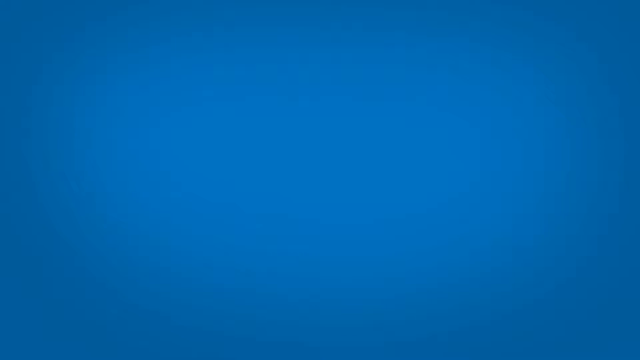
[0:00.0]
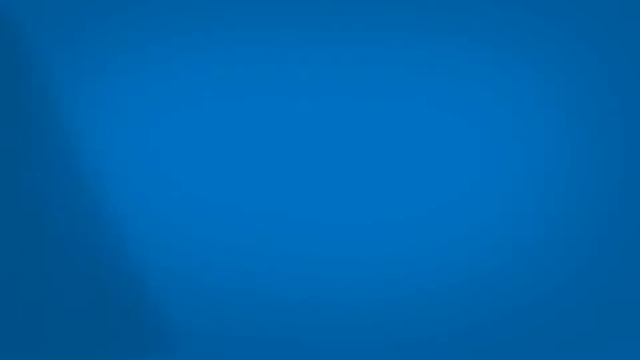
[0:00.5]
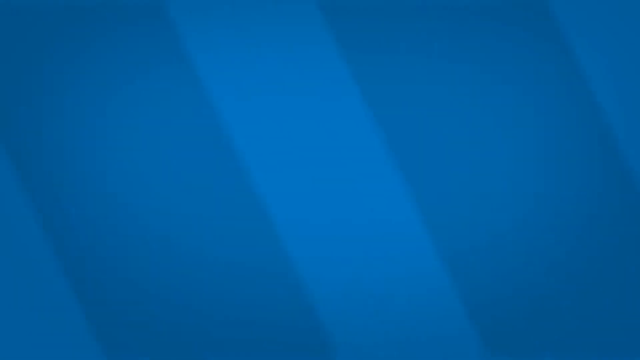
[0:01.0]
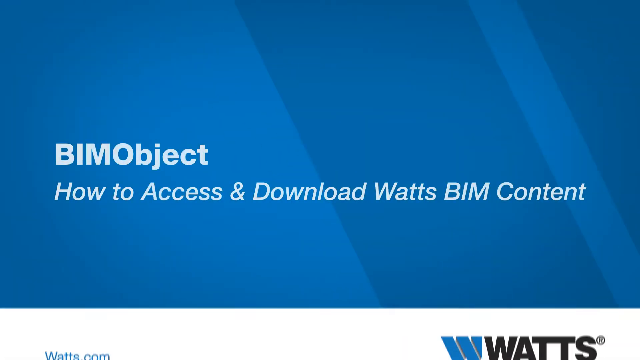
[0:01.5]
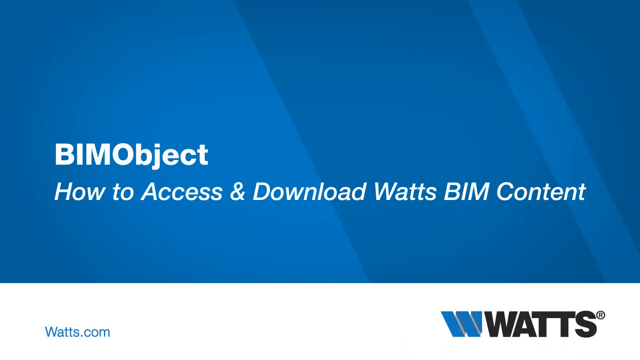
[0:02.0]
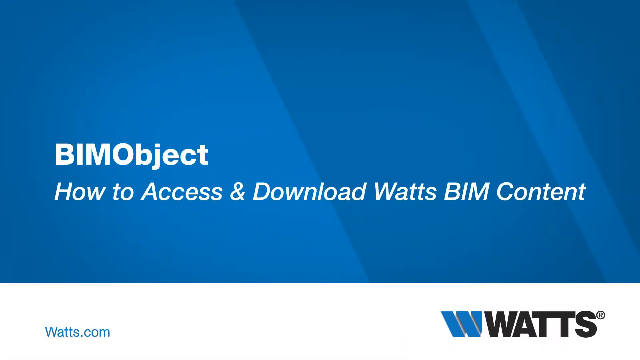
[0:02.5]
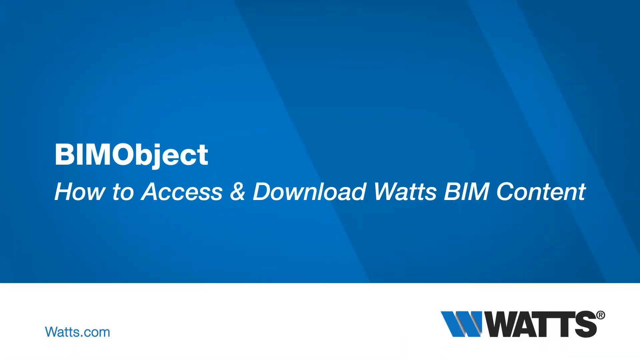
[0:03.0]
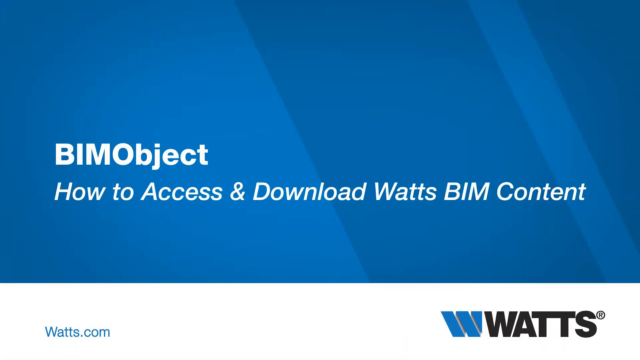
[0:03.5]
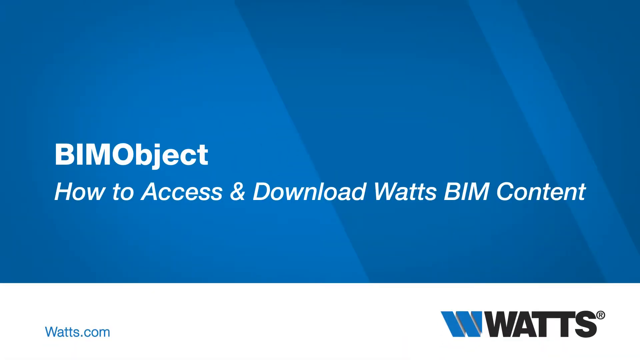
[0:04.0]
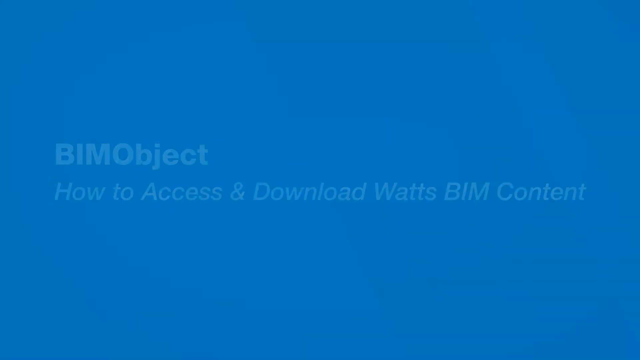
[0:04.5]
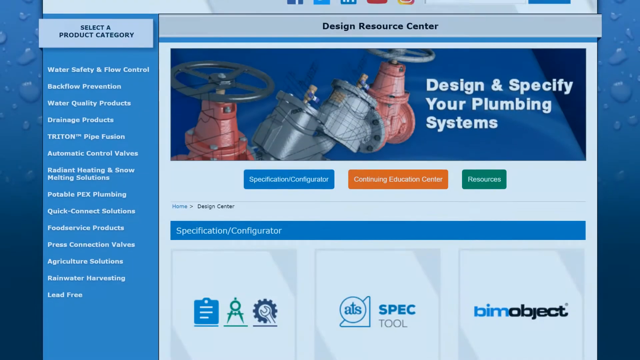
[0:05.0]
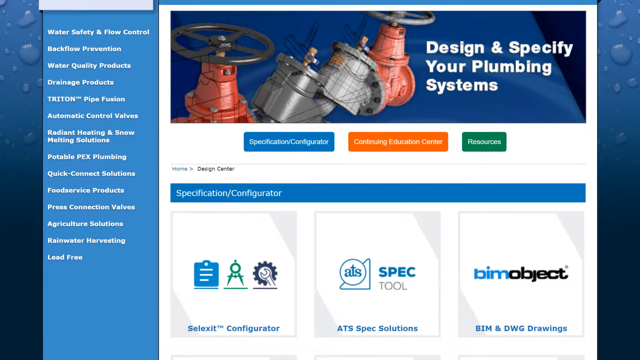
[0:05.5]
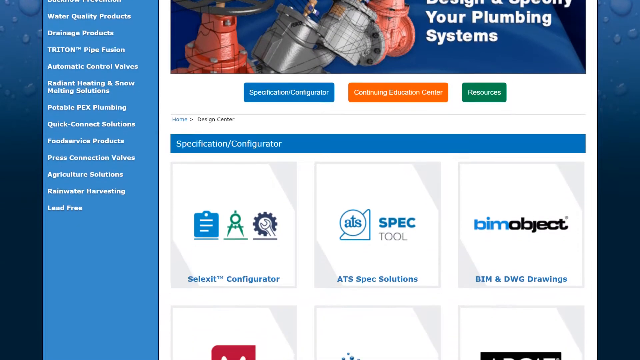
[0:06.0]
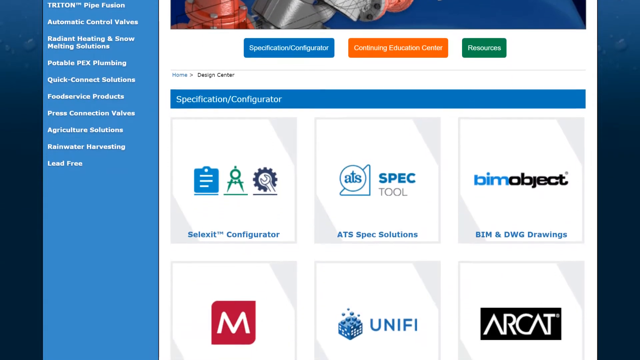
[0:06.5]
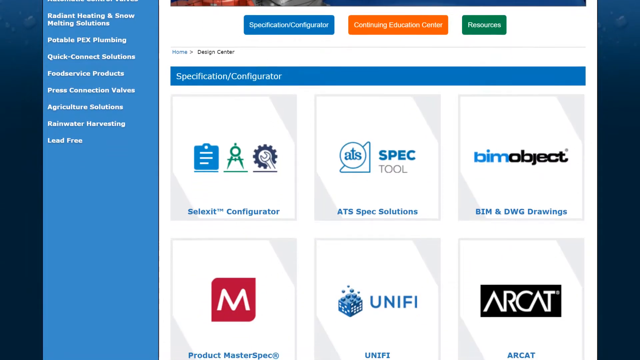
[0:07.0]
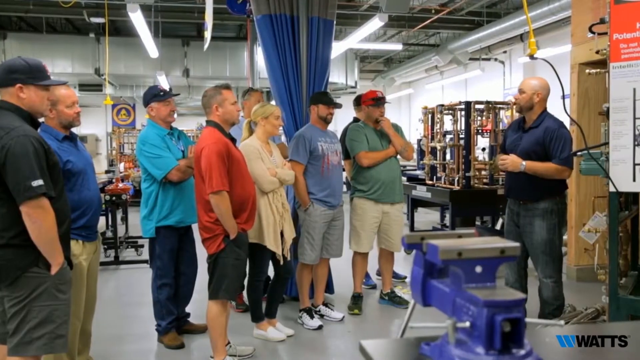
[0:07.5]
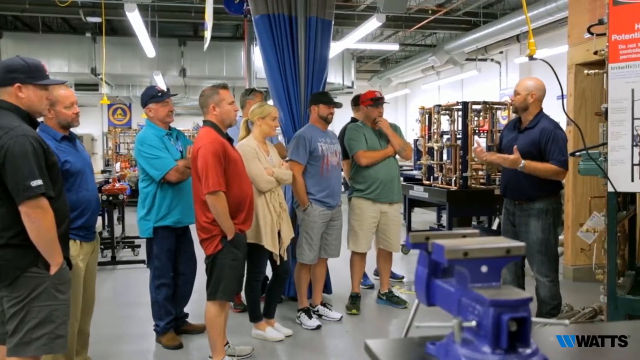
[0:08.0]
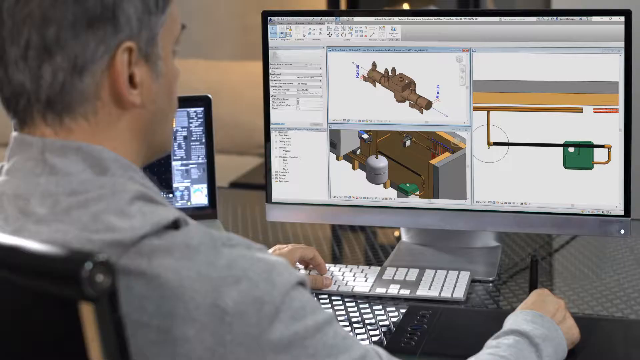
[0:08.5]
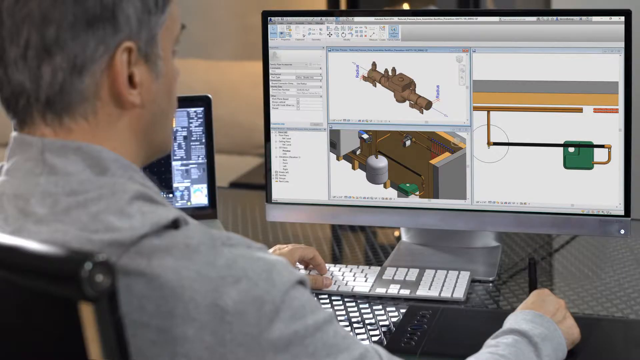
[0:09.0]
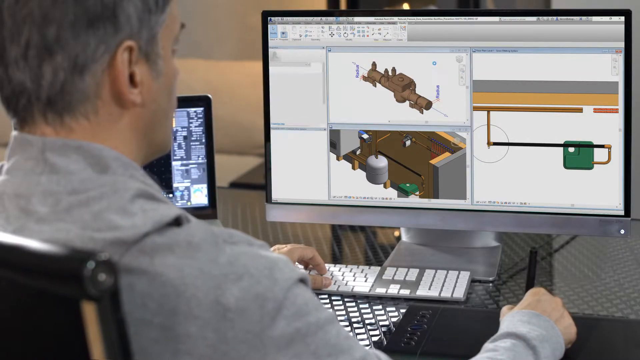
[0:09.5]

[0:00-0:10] Text reading "BIM object" appears with a heading about how to access and download, and then the screen scrolls. A guy is shown talking to some people. The screen scrolls on and shows a specification configurator with options including BIM and ACAD. A guy is then shown on the internet, maybe looking for and searching the website, and images of what he is searching appear on his computer desktop.